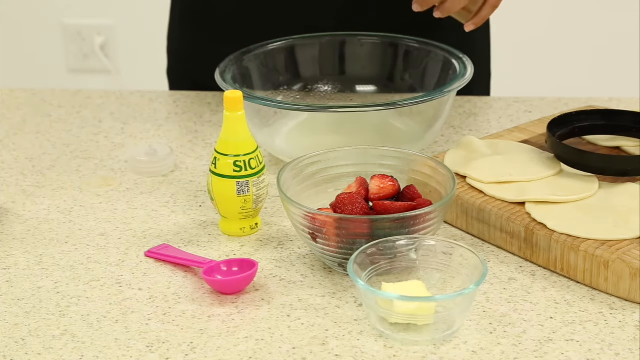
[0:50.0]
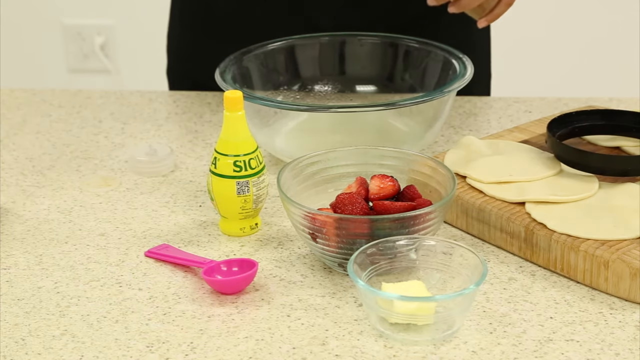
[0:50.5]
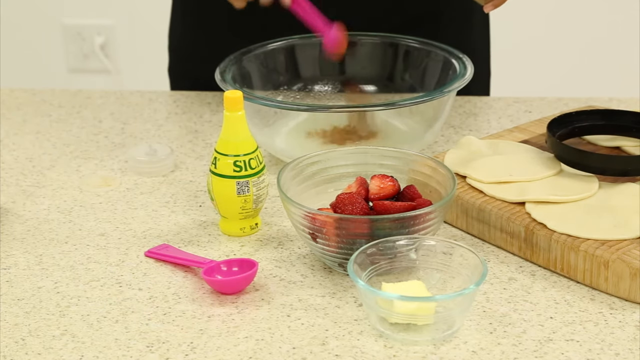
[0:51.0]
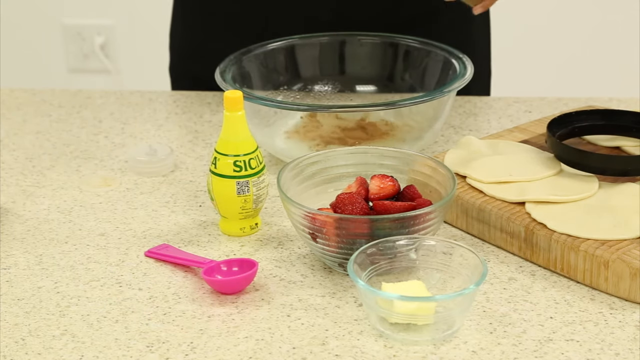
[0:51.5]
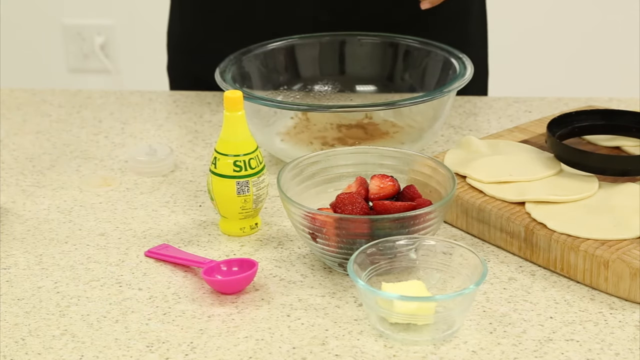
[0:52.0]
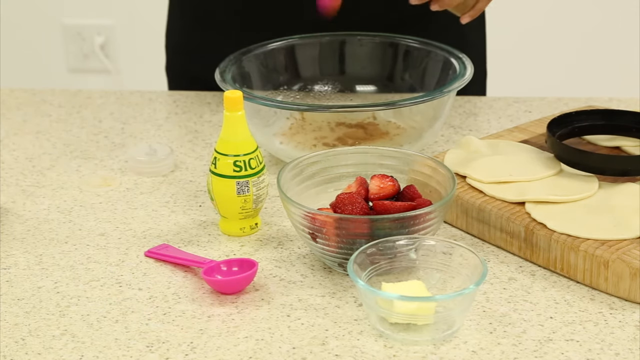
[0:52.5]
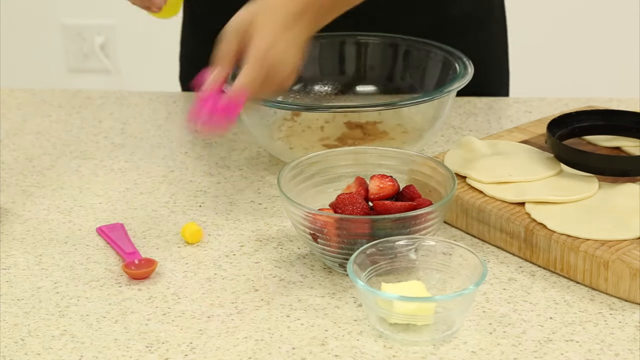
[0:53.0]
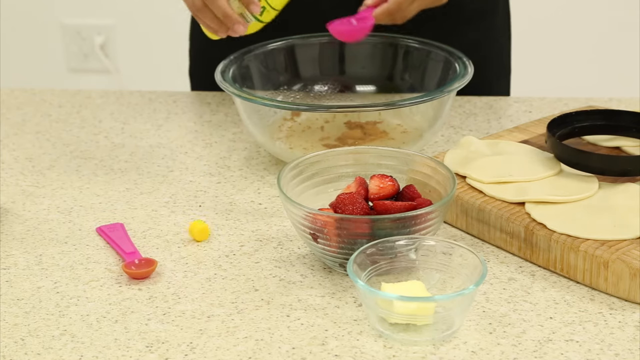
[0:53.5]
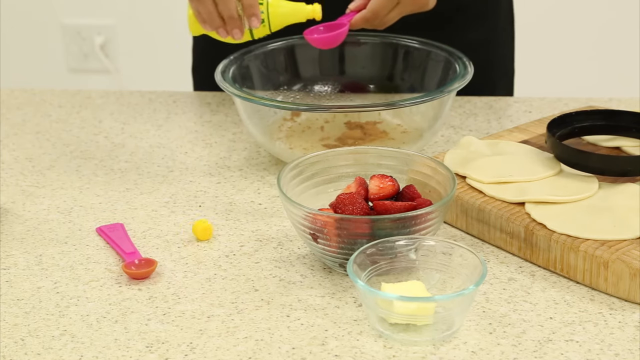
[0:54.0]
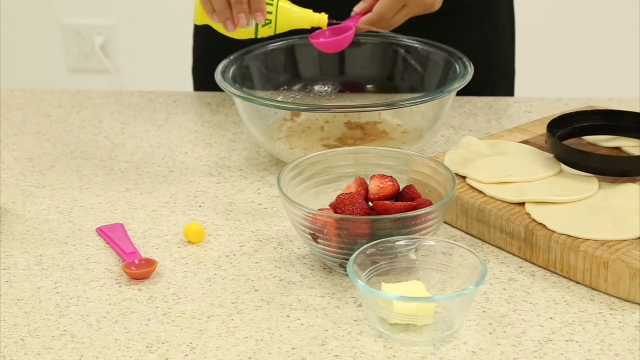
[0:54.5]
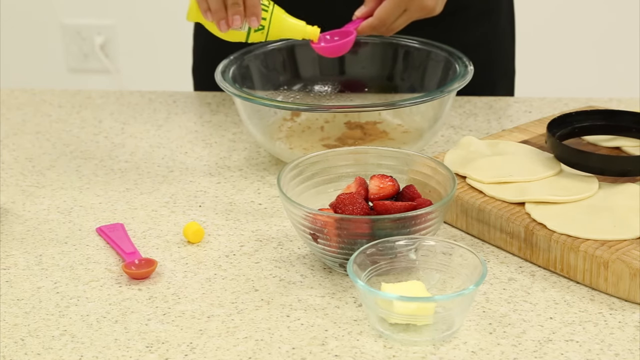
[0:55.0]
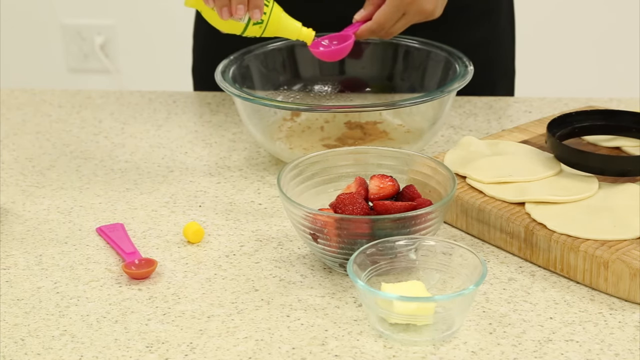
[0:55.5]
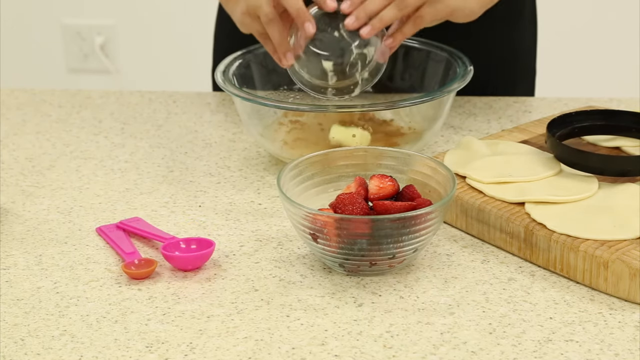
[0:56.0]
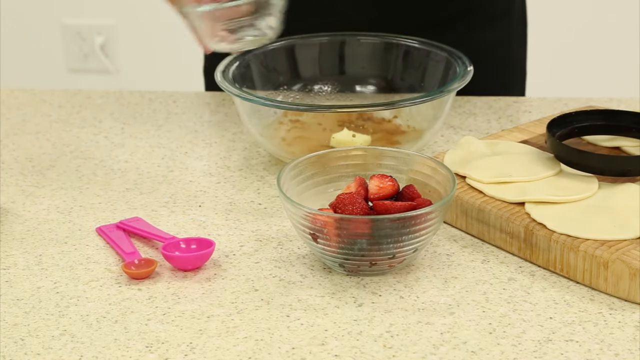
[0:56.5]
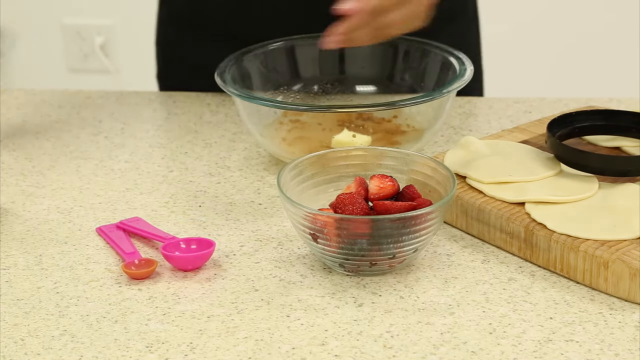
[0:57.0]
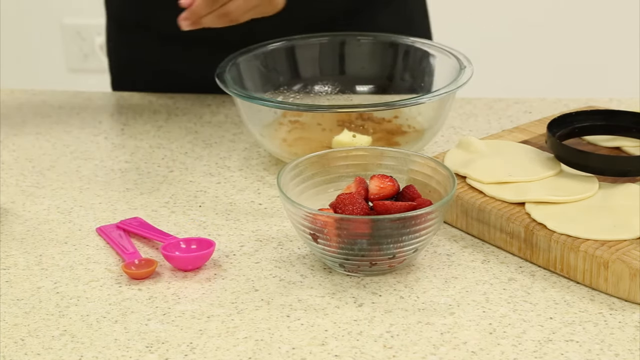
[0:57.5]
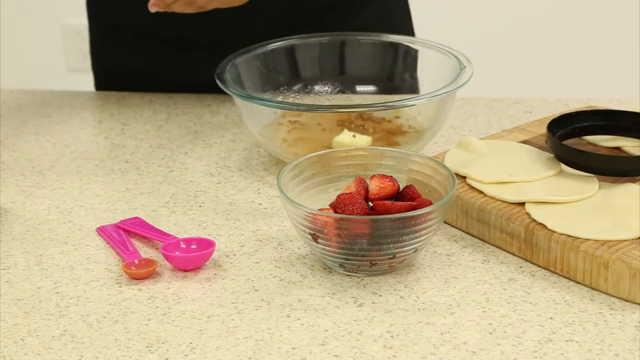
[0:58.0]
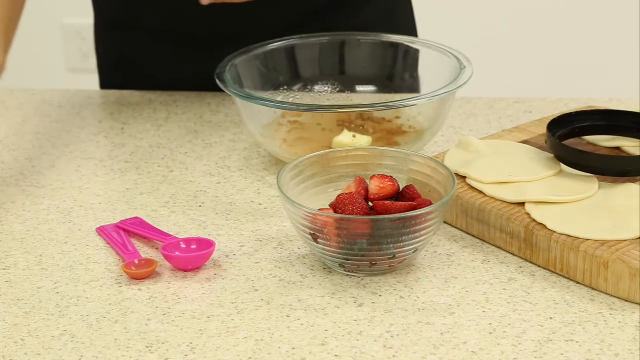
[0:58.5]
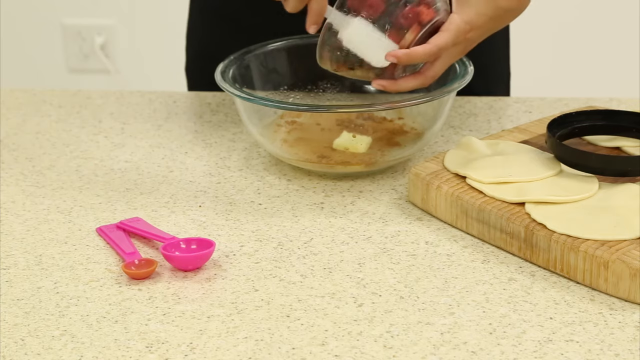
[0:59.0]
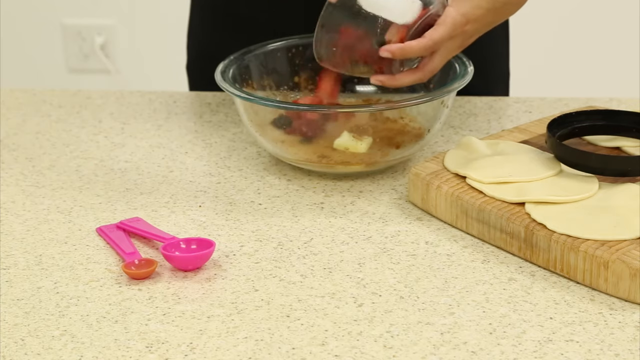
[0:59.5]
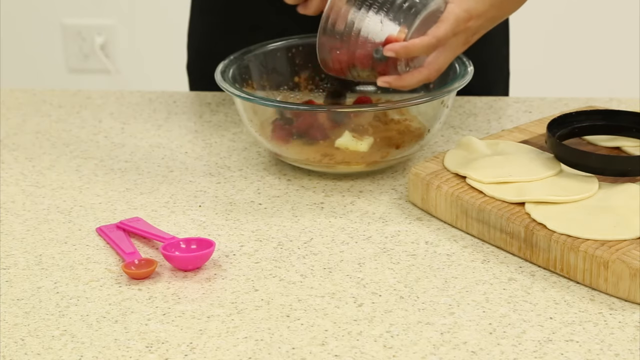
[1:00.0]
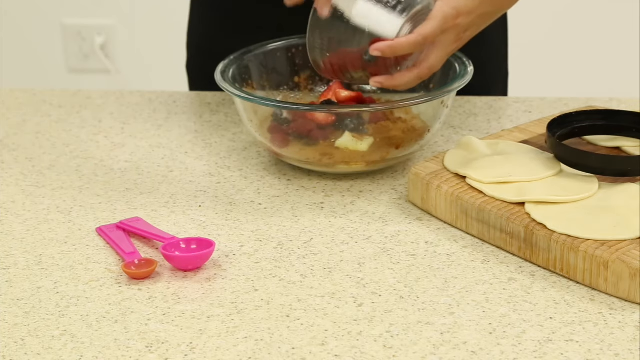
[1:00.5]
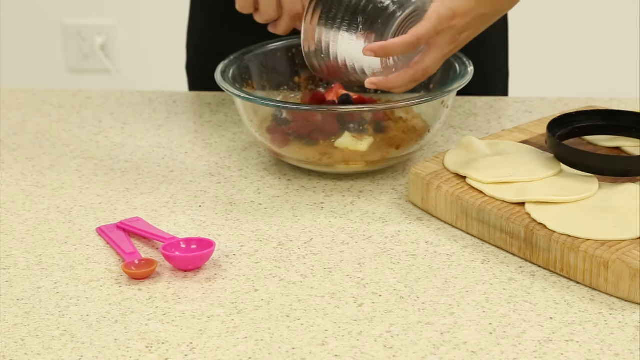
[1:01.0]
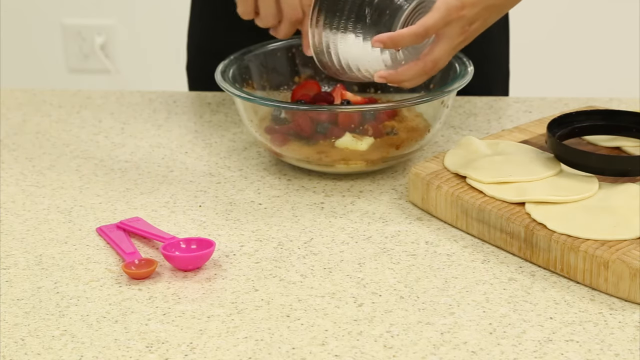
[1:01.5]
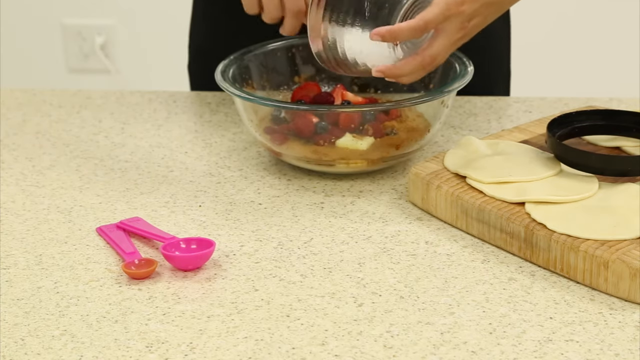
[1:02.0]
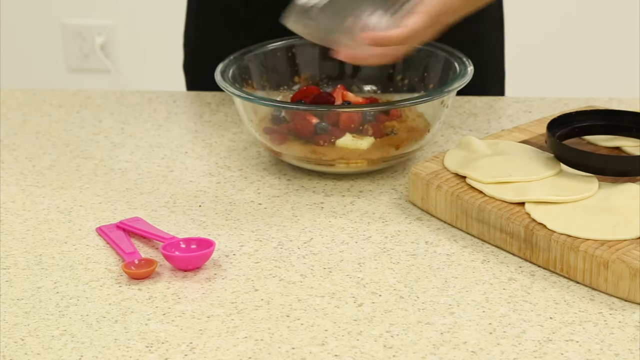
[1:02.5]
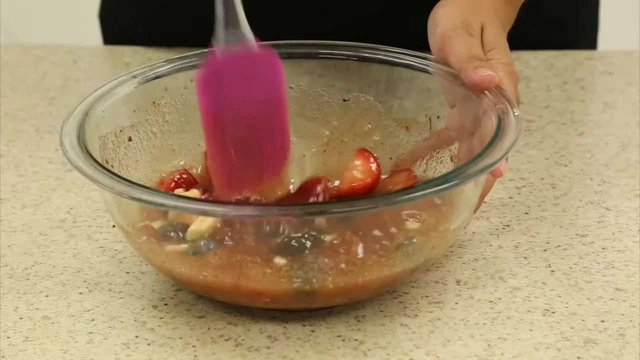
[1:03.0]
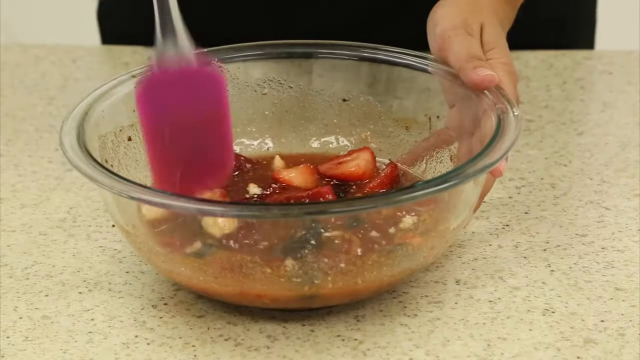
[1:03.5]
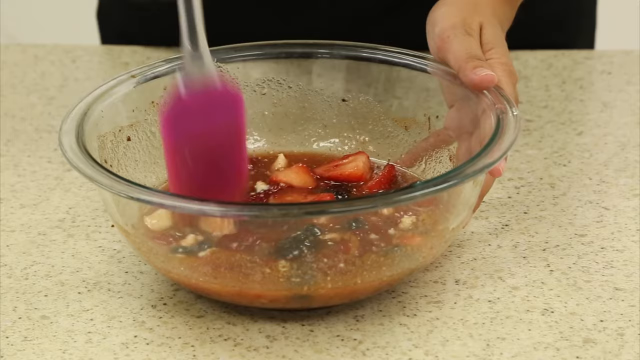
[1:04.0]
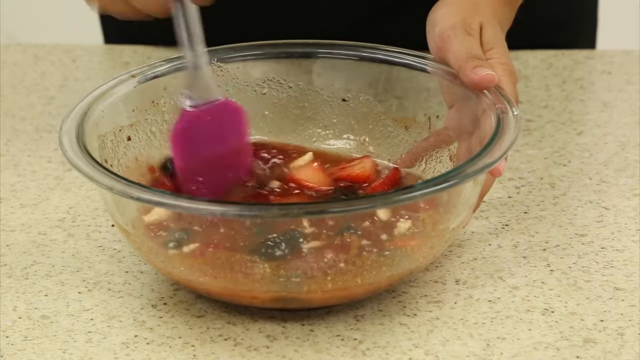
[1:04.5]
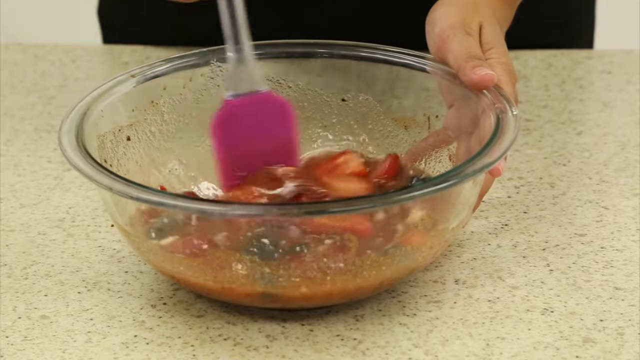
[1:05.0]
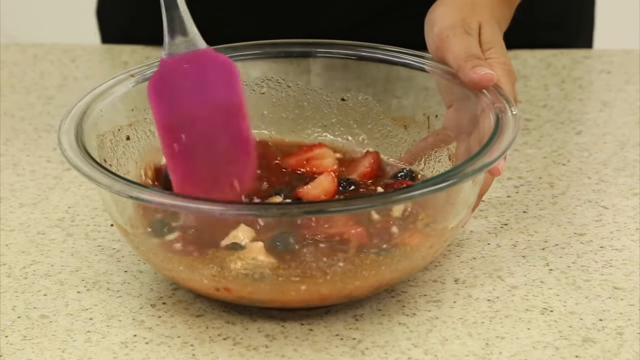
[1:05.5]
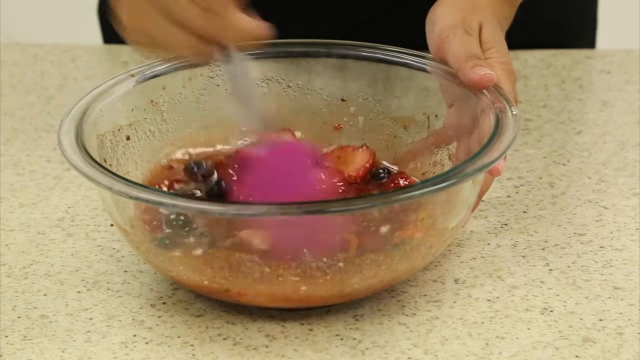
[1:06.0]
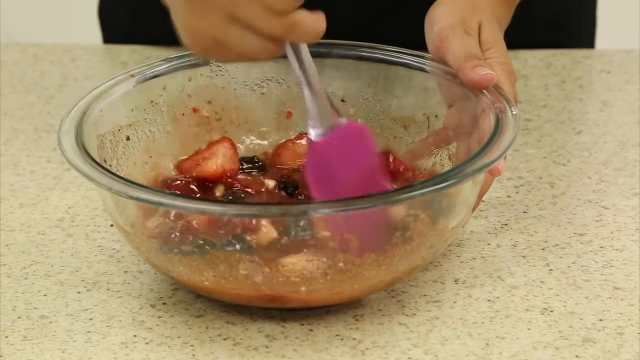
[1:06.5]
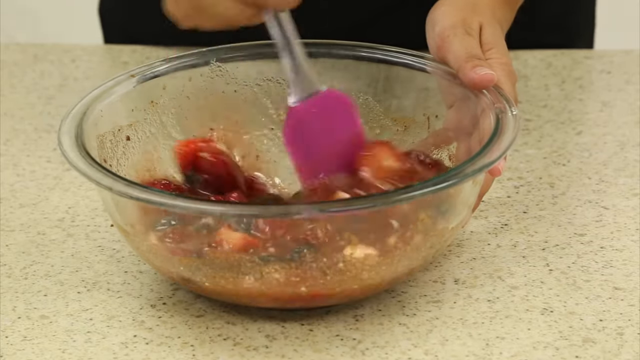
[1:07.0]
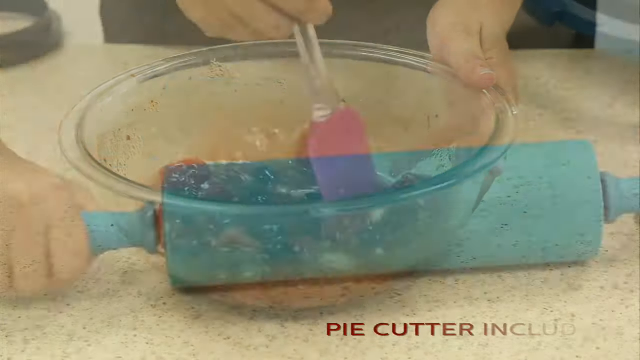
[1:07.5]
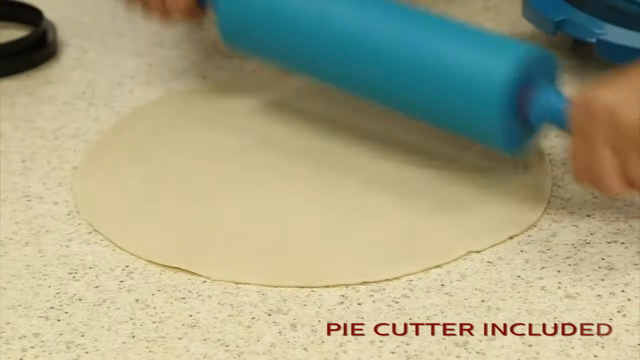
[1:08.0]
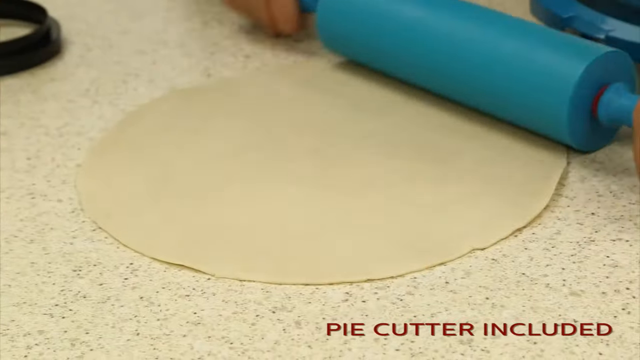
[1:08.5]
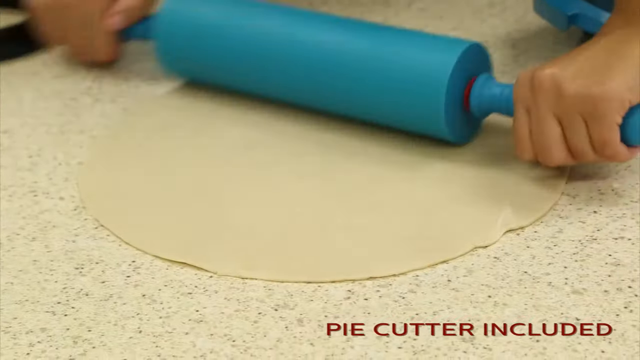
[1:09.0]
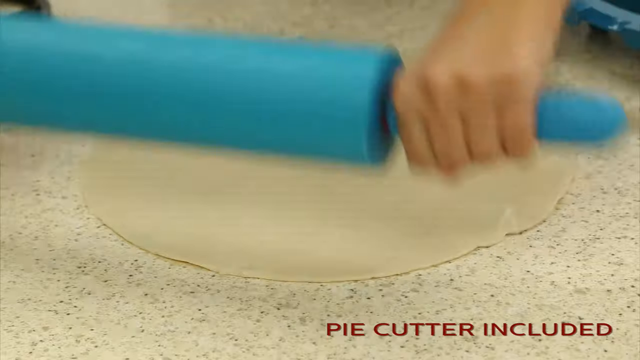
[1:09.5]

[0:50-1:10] The man continues preparing to make the pie; his fruits include a strawberry. He adds the fruits, apparently blueberries and strawberries, into the mix where he added butter and other ingredients, then uses a spatula to mix everything. He preps everything so it is well aligned, then uses a circular cutter to cut through the tortilla, making round tortillas that are even and equal to each other.